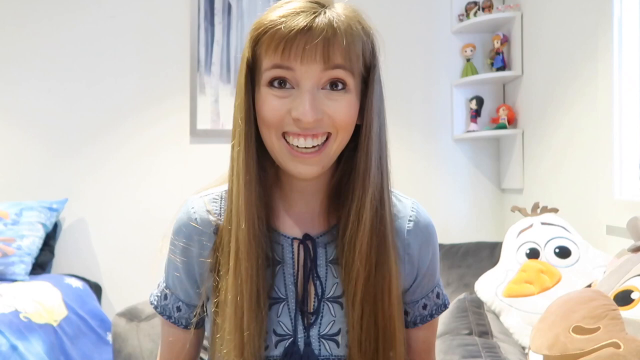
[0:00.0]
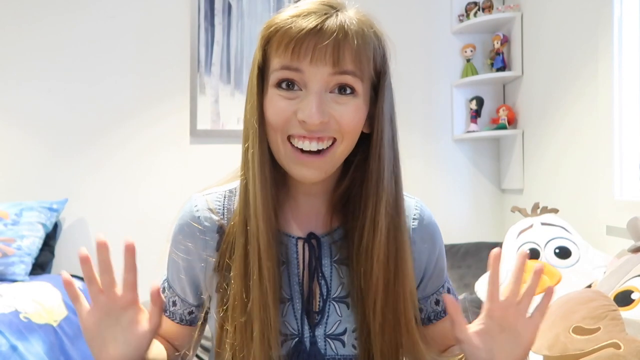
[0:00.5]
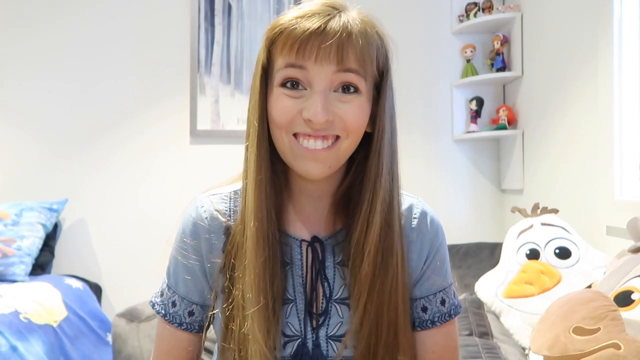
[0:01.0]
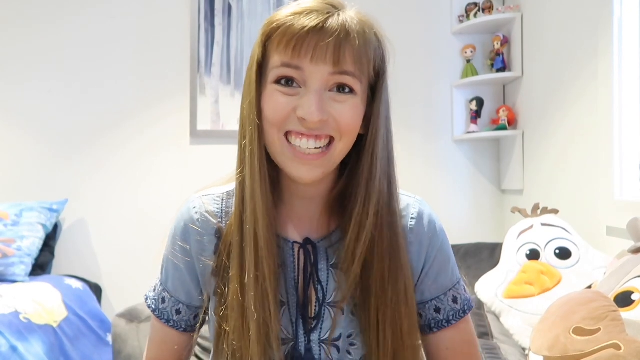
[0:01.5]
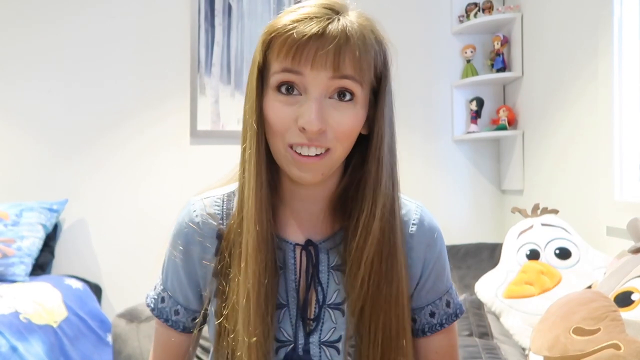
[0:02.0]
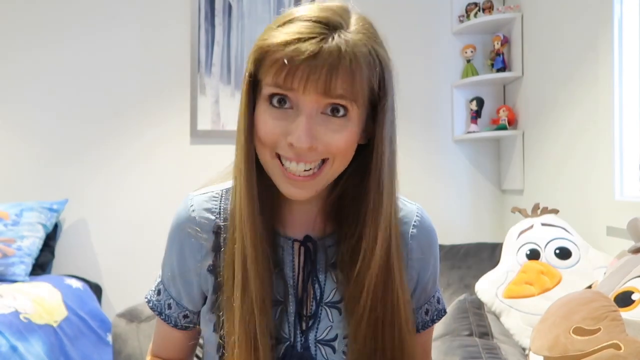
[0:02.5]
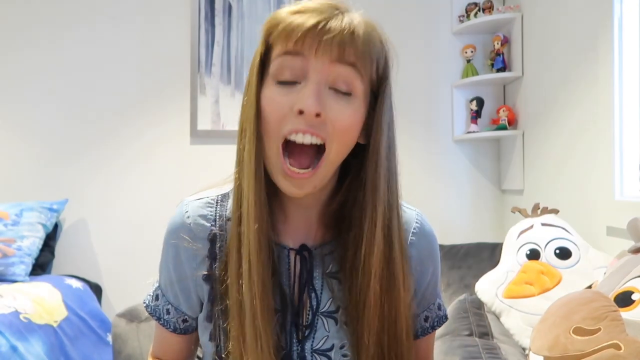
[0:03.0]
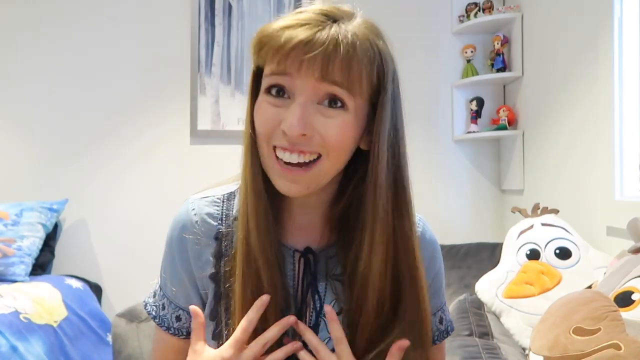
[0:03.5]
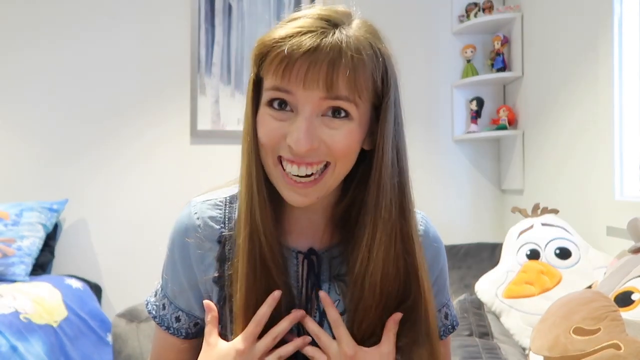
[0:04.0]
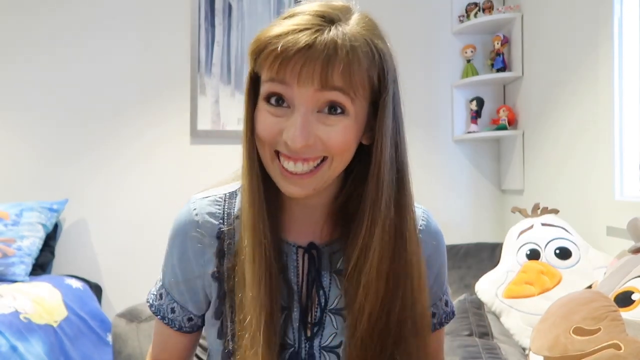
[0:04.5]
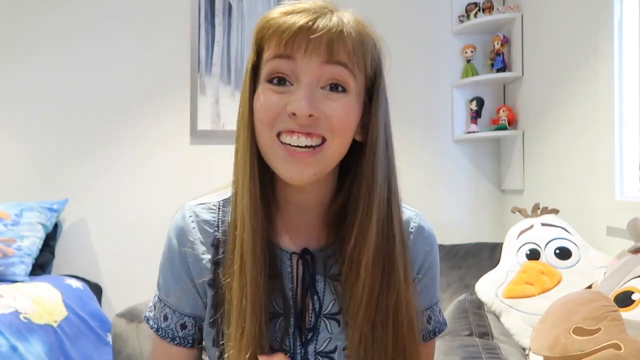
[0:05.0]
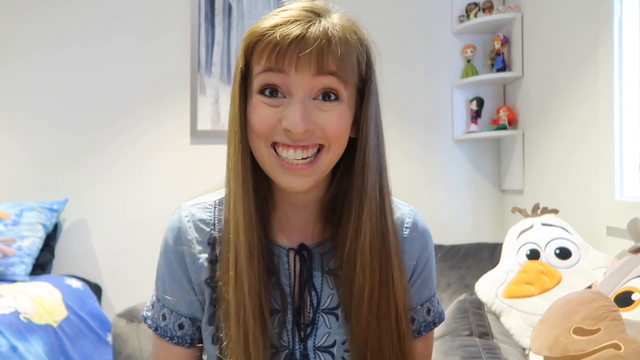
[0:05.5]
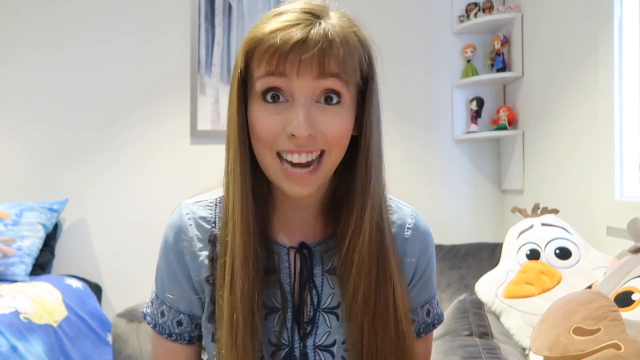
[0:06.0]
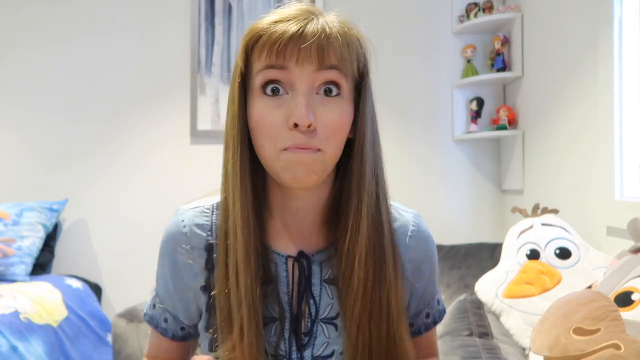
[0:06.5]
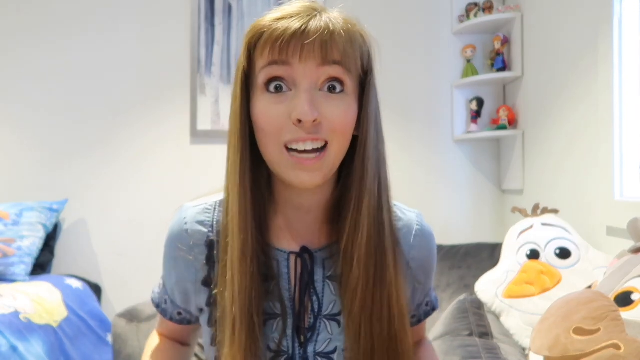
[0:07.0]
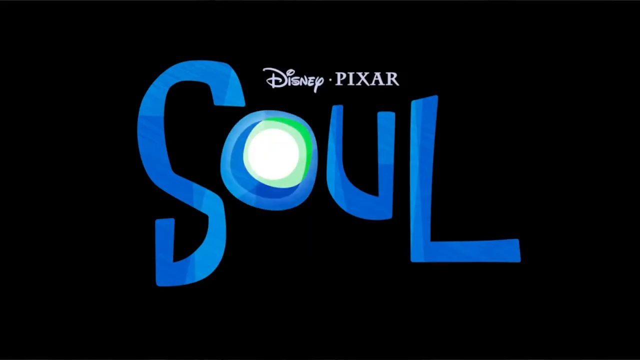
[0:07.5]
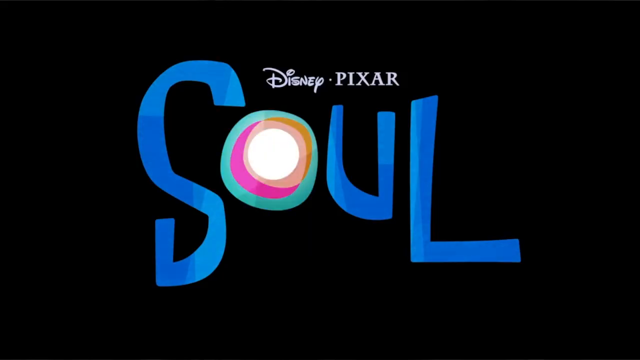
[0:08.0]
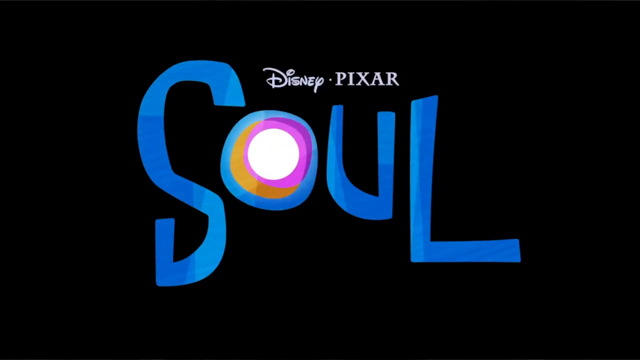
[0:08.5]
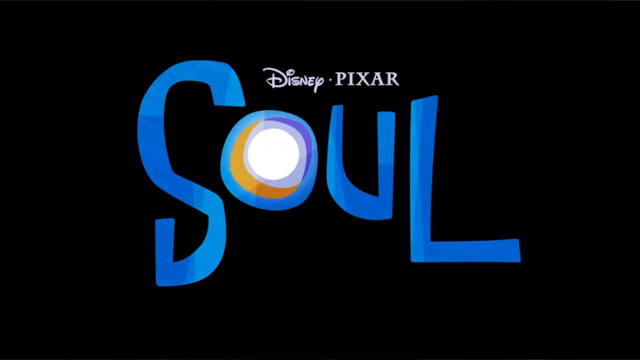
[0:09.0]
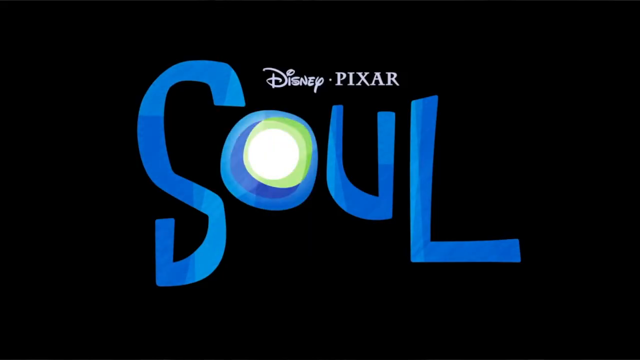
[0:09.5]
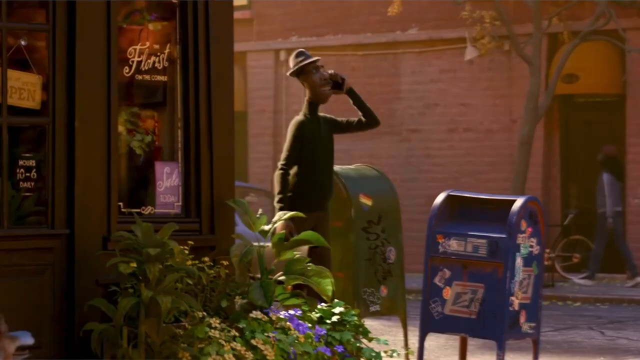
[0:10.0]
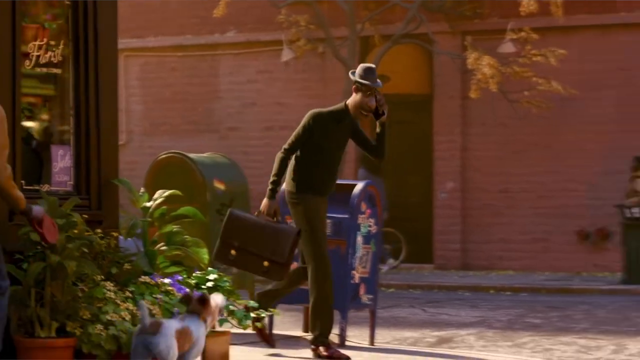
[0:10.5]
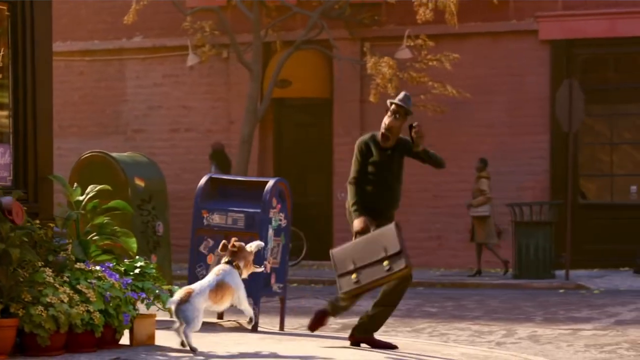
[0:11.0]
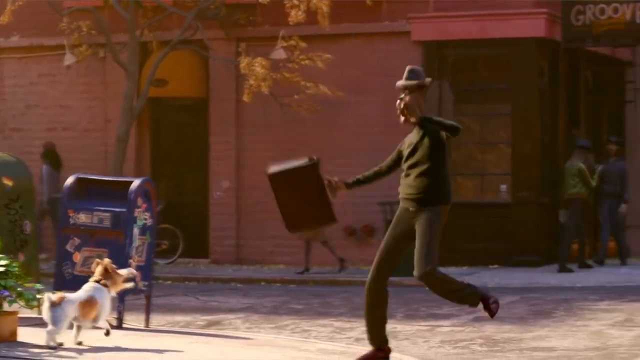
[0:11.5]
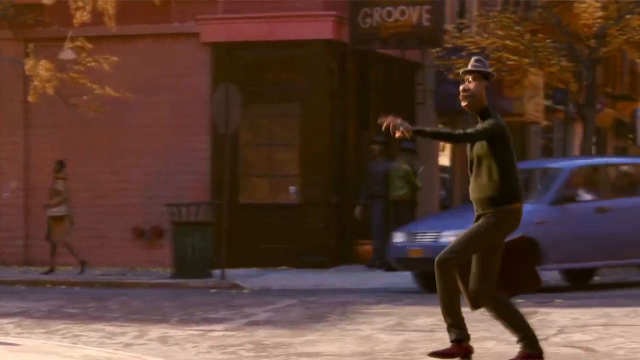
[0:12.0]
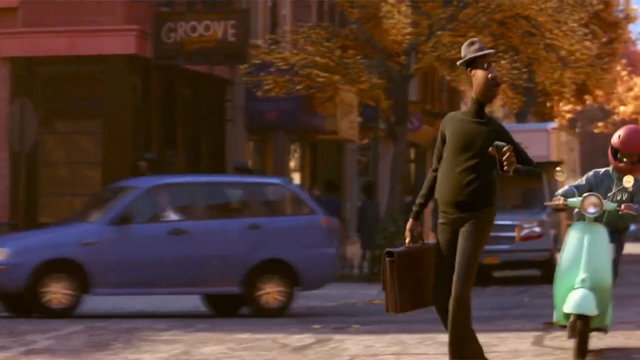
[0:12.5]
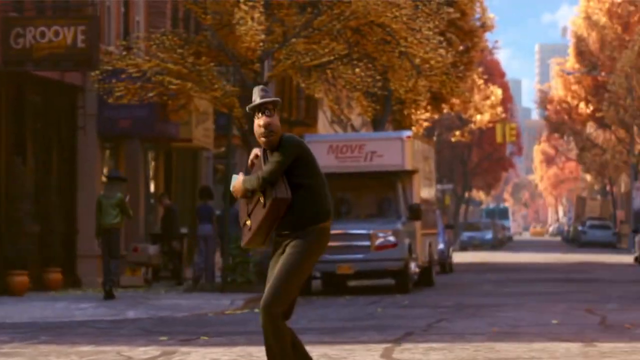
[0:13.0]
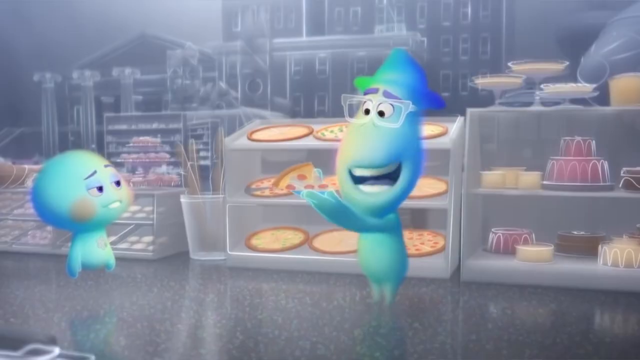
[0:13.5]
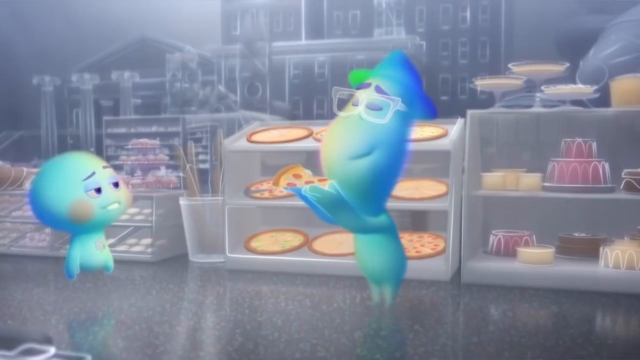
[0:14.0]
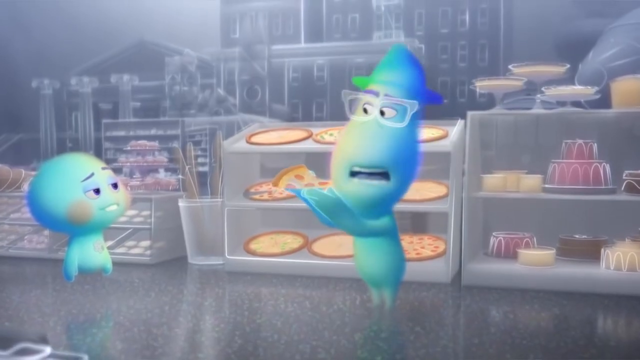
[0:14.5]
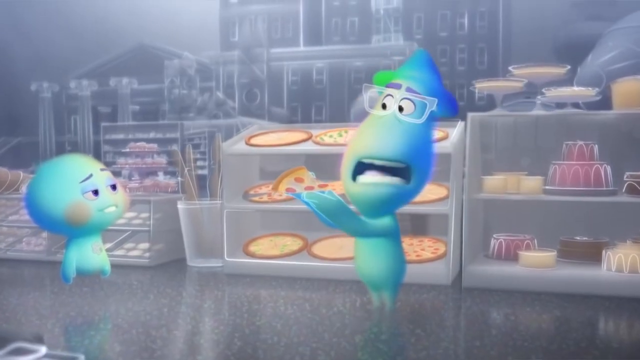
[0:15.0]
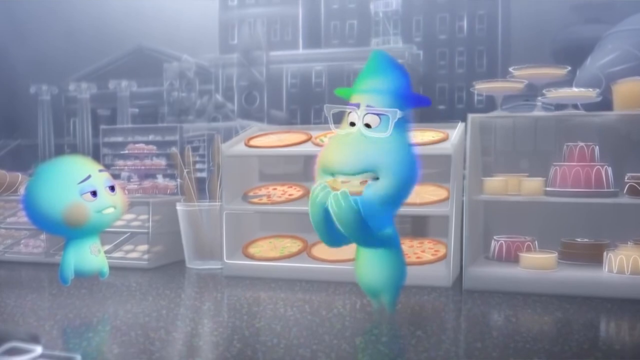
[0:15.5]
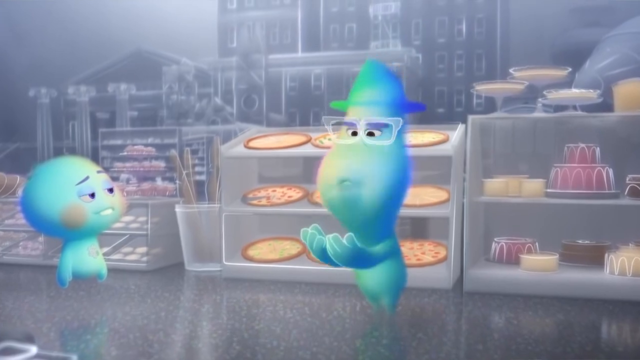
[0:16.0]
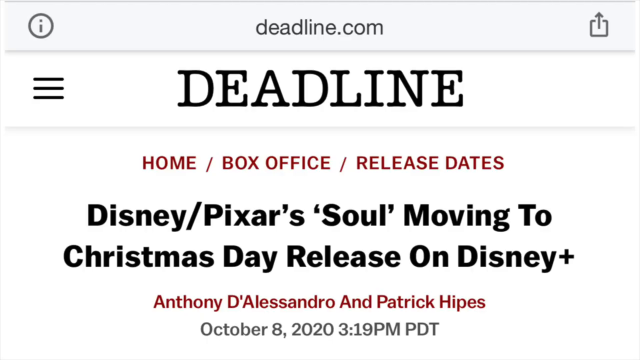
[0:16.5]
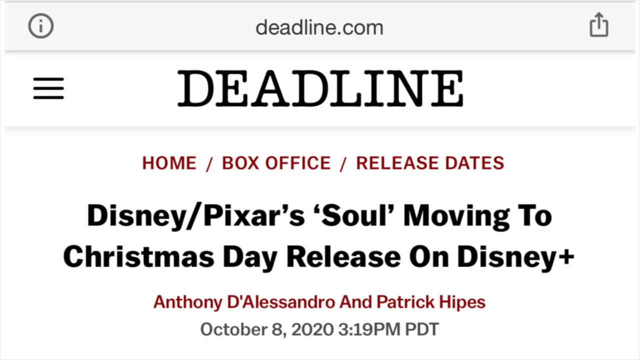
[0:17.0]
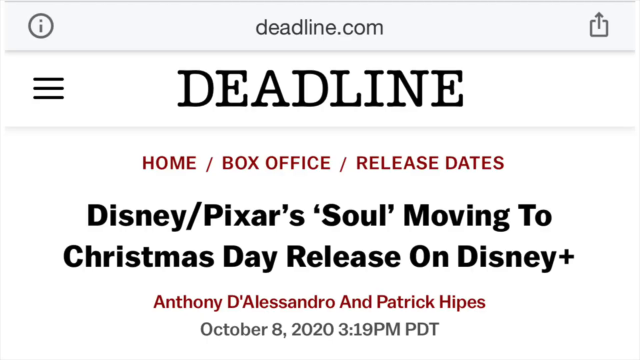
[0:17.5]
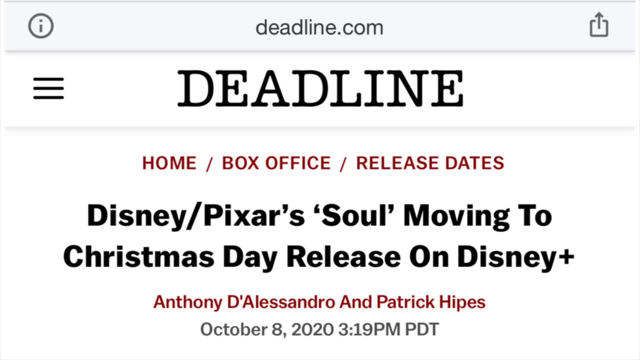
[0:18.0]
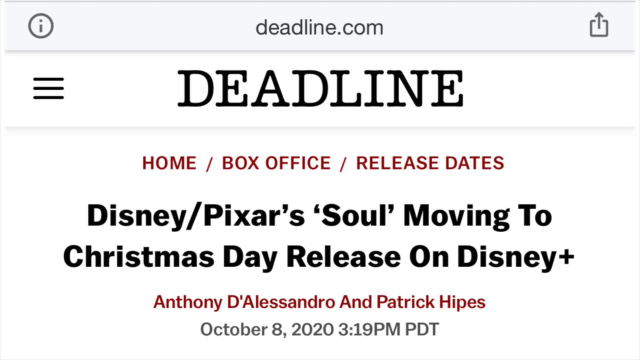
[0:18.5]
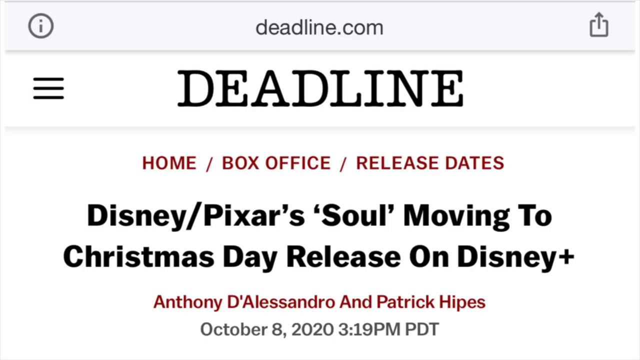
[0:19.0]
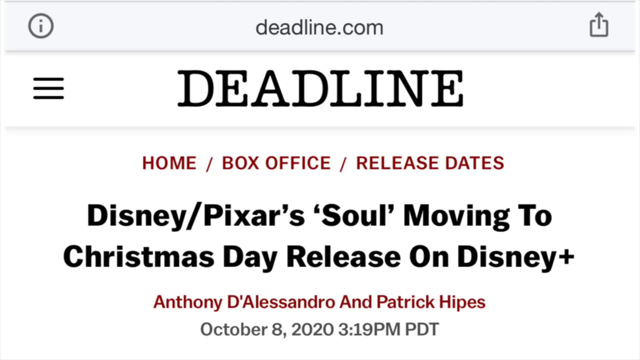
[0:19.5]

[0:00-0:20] A woman with long, straight blonde hair, apparently in her 20s, is in a bedroom, looking straight at the camera with a broad smile. She waves at the camera with both hands and starts talking, apparently very enthusiastically. The bedroom has different figurines on a shelf on the wall. The word "soul" then appears on the screen. An animation follows in which a man wearing a hat and carrying a suitcase is barked at by a dog and dodges a passing motorcycle. Next come what appear to be two ghosts, an adult and a little kid; the adult ghost has what appears to be a slice of pizza in his hand, and he eats it. Then the words "deadline Disney Pixar's Soul moving to Christmas Day release on Disney+" appear.